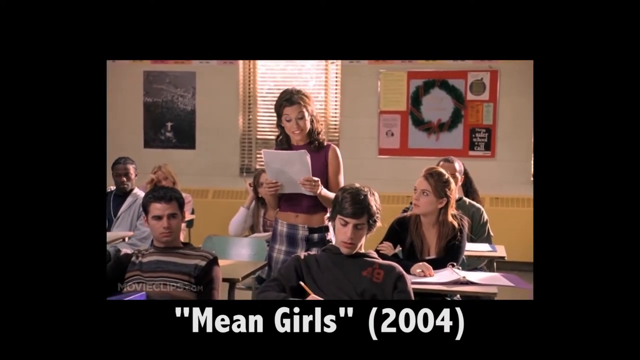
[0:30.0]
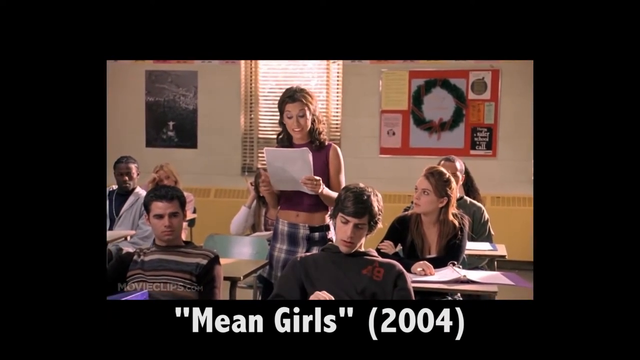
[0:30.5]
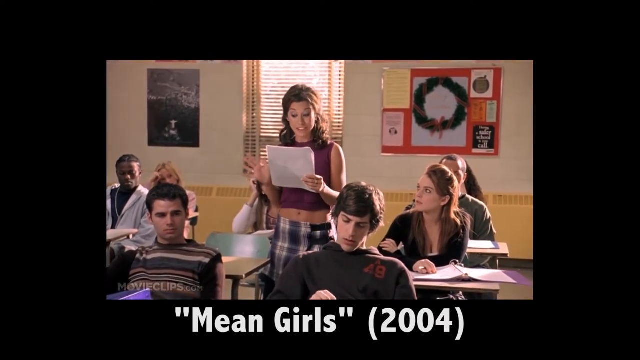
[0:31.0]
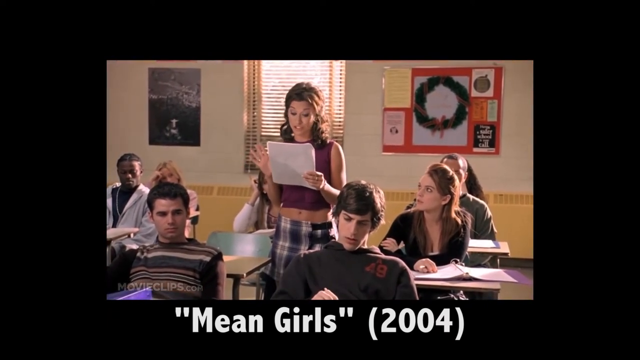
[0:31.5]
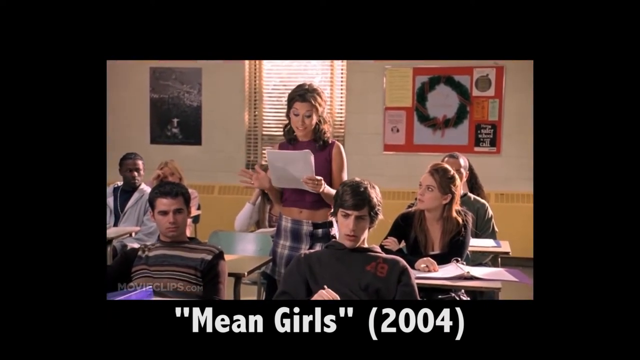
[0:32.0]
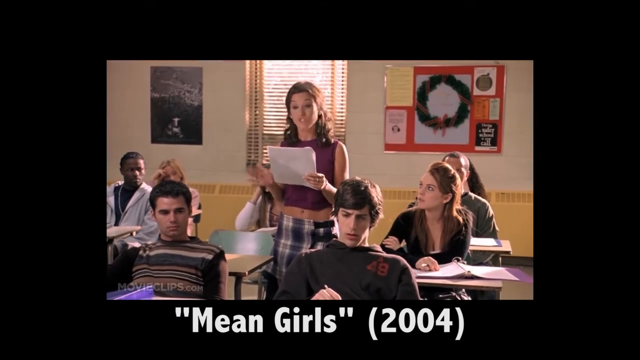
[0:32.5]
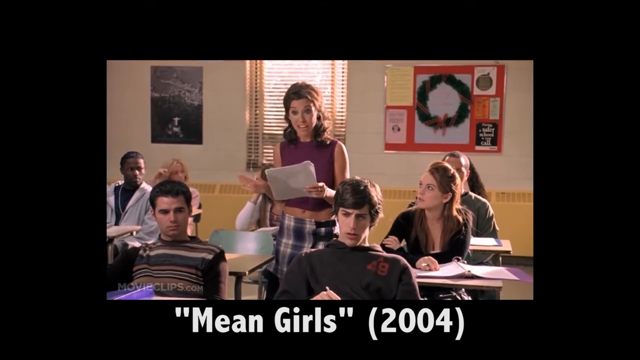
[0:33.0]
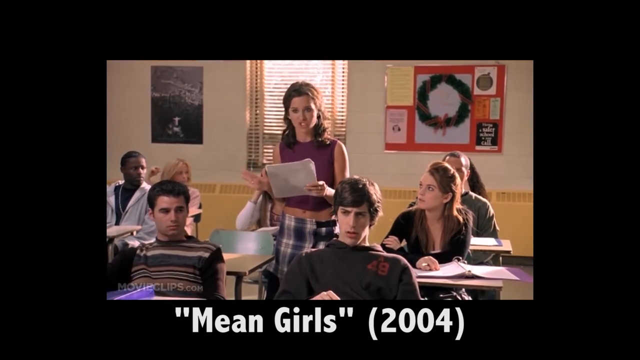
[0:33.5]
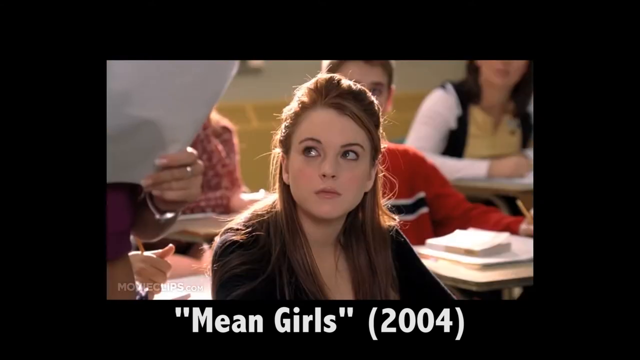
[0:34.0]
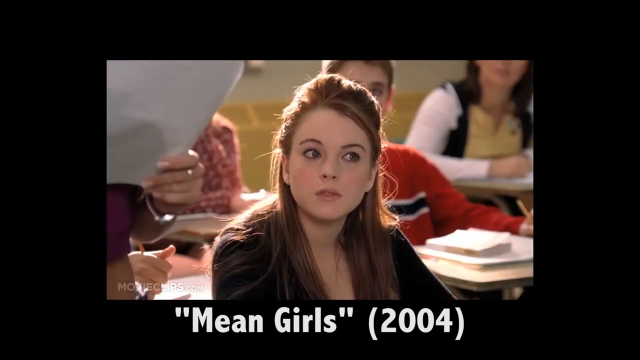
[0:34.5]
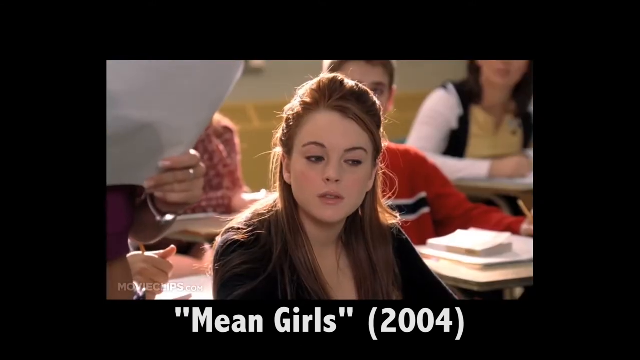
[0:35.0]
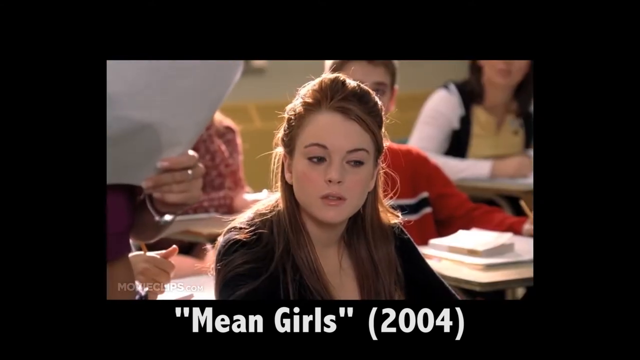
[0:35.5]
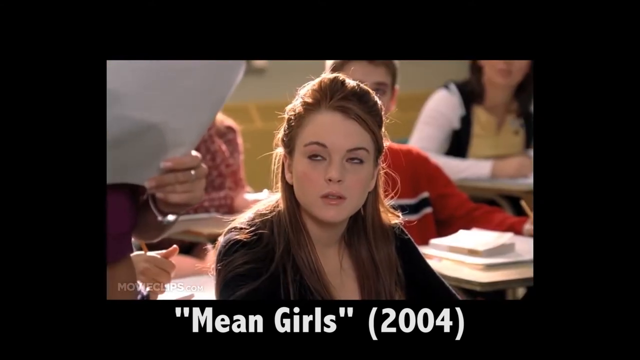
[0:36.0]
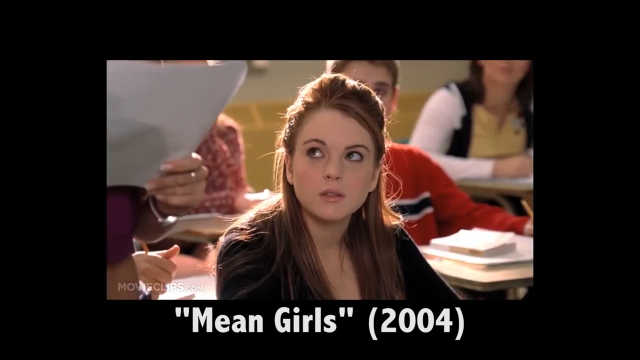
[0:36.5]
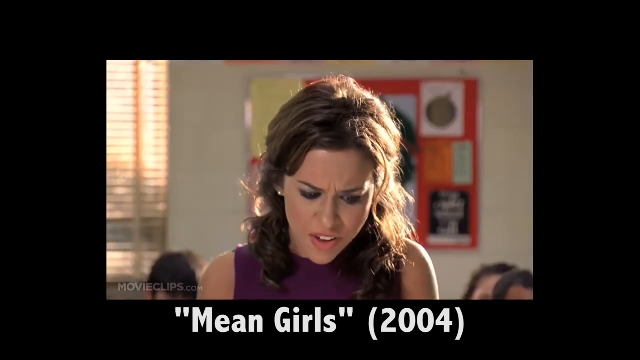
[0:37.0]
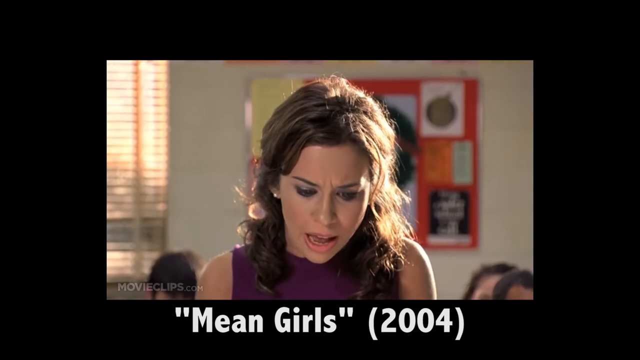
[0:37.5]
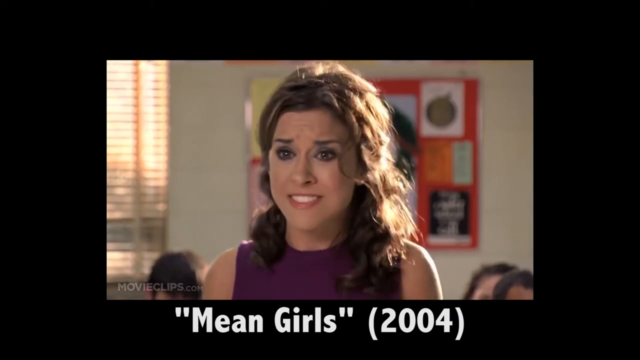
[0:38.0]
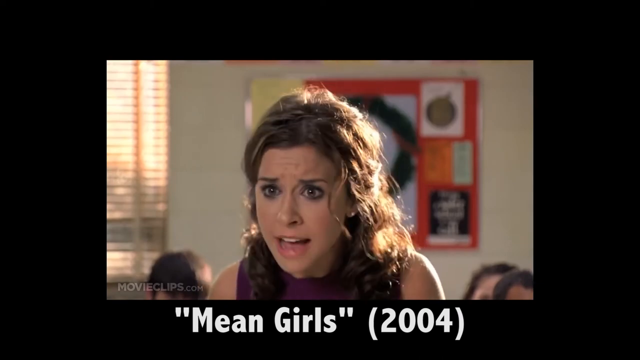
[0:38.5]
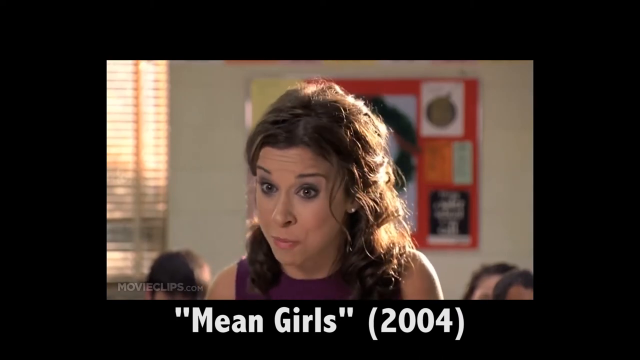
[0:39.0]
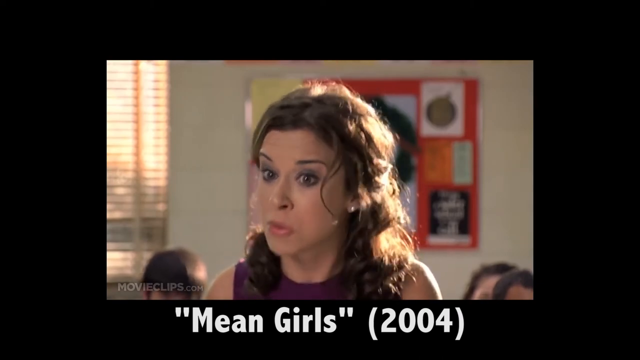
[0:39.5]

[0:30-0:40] A student stands in the middle of a classroom, holding a white paper in front of her and reading something, while the other students sit around her. The camera moves to one of the students, who wears a black shirt and has long brown hair, as she looks up and focuses her attention on the reader. When the camera goes back to the reading student, she looks very agitated or very upset as she reads and emphasizes what she is reading. The title "Mean Girls 2004" is at the bottom of the video.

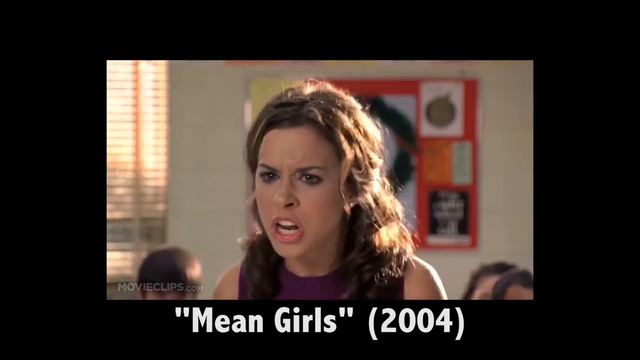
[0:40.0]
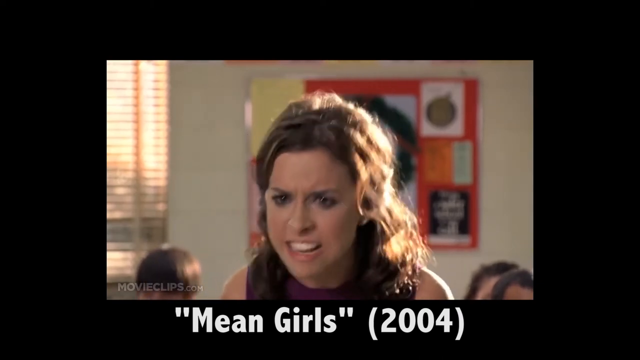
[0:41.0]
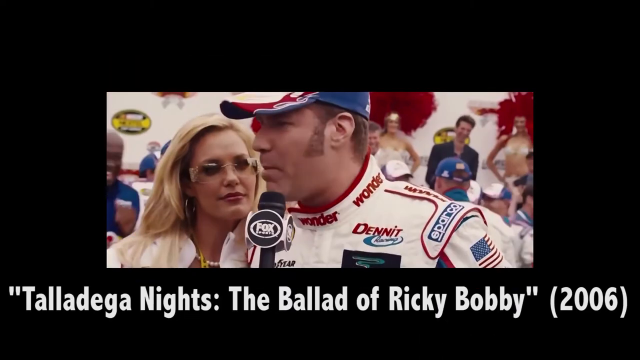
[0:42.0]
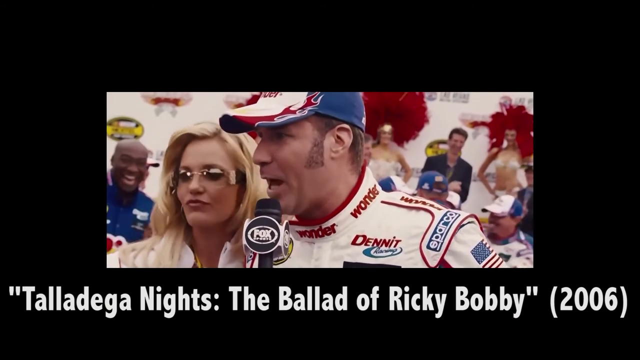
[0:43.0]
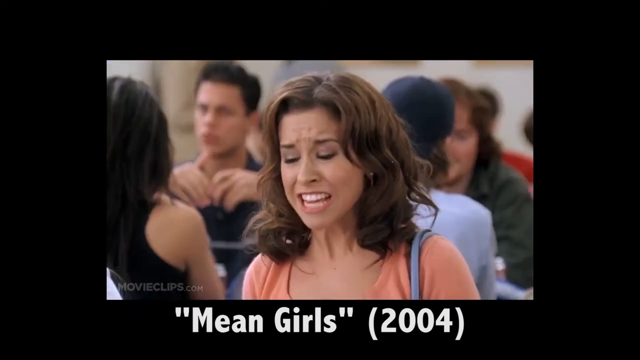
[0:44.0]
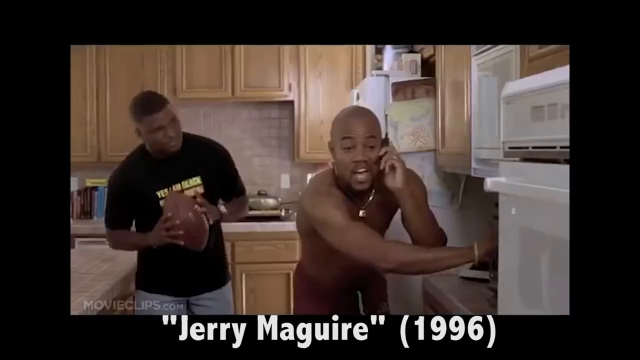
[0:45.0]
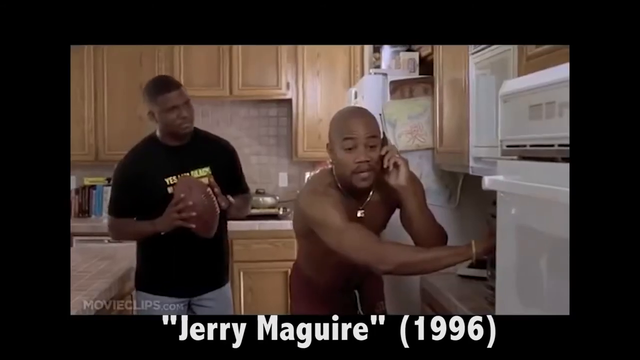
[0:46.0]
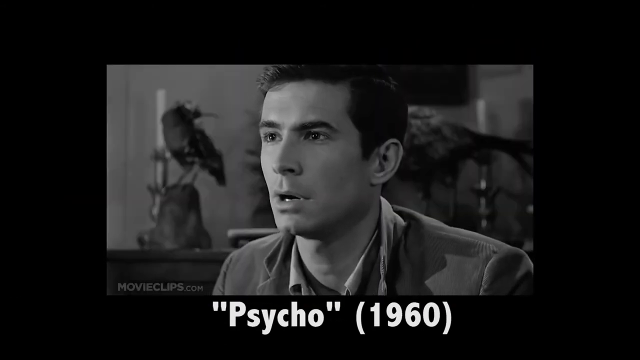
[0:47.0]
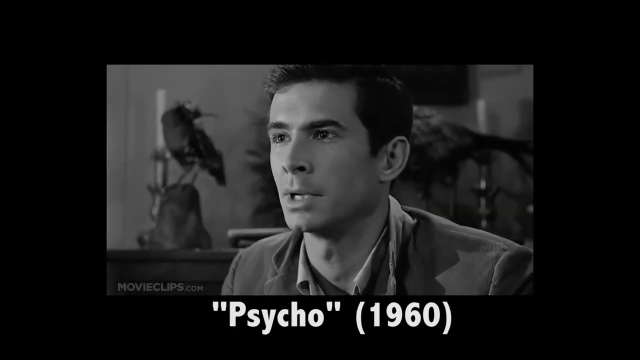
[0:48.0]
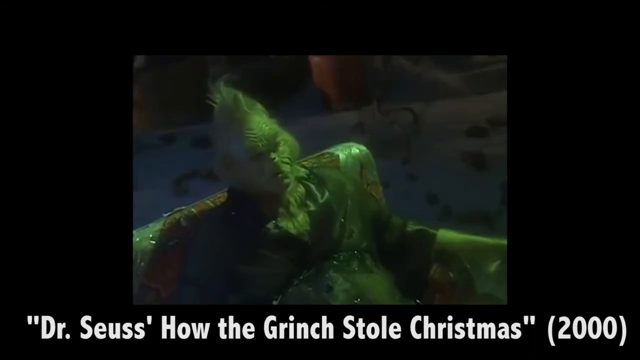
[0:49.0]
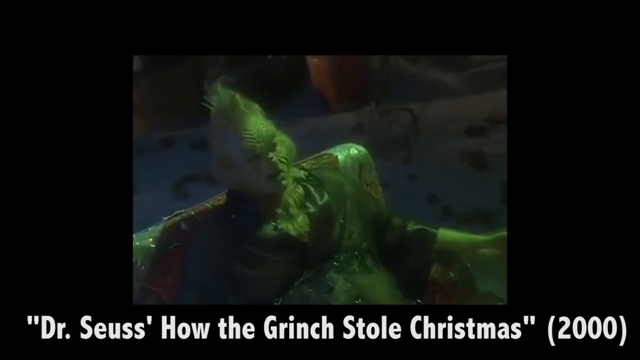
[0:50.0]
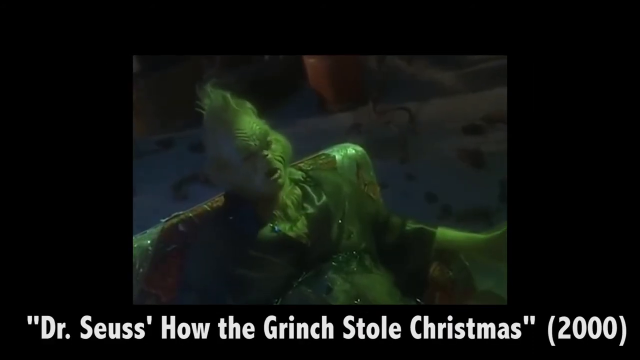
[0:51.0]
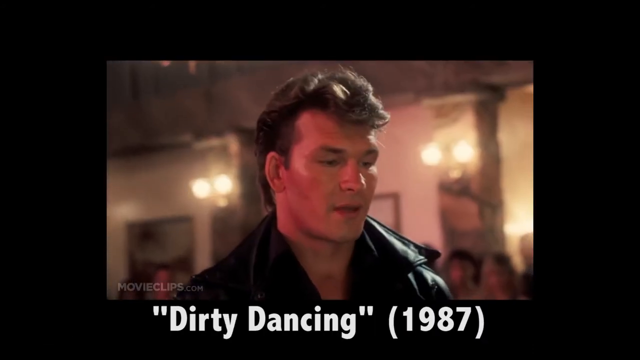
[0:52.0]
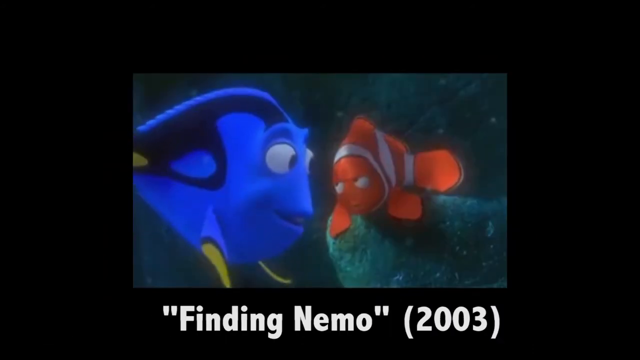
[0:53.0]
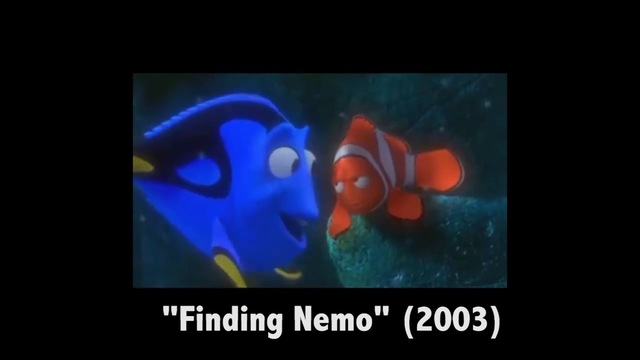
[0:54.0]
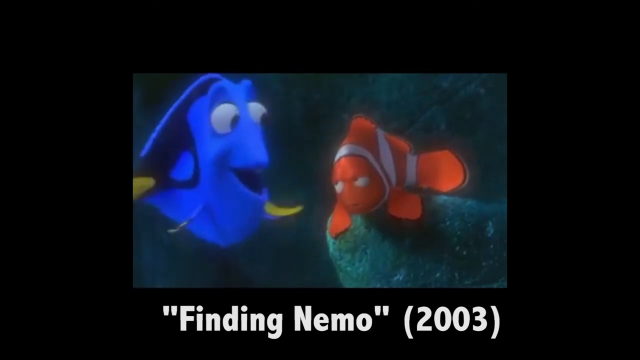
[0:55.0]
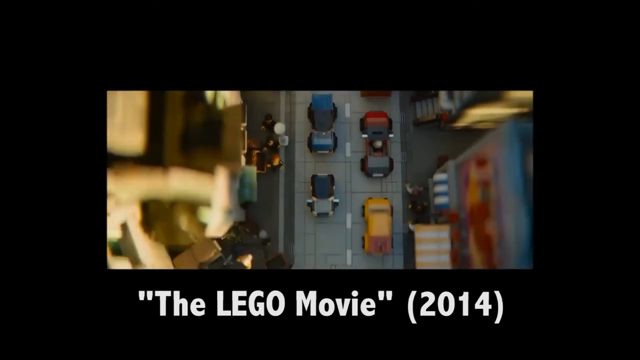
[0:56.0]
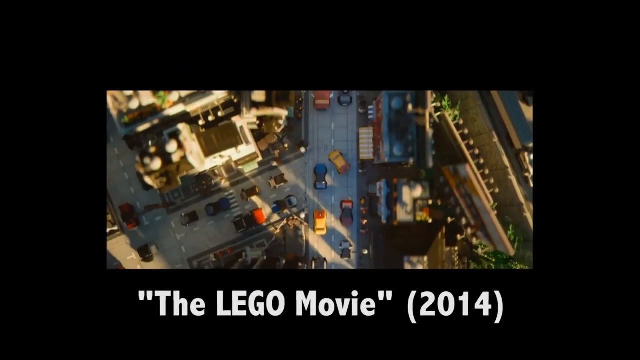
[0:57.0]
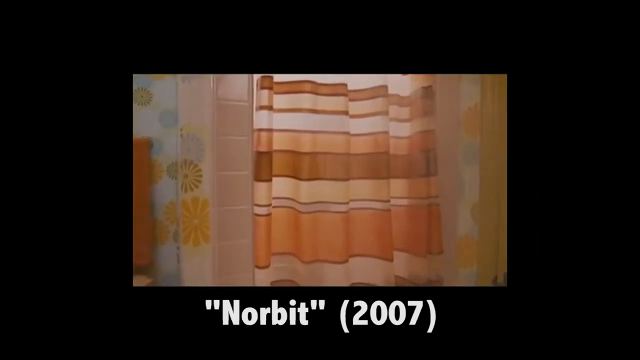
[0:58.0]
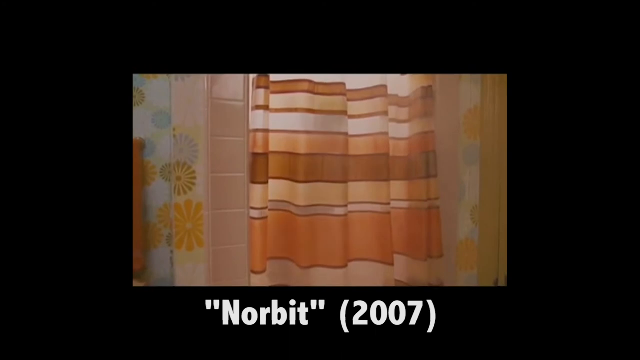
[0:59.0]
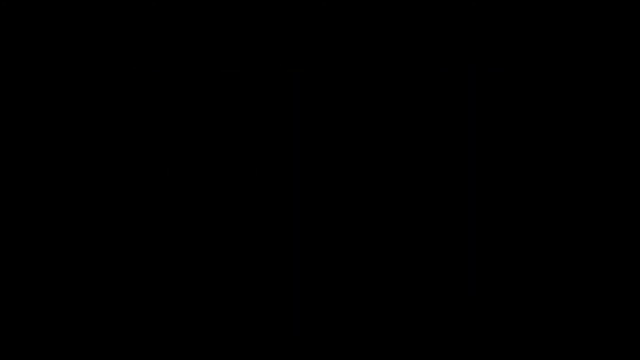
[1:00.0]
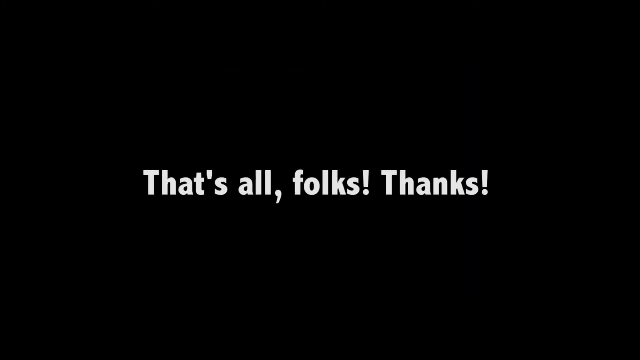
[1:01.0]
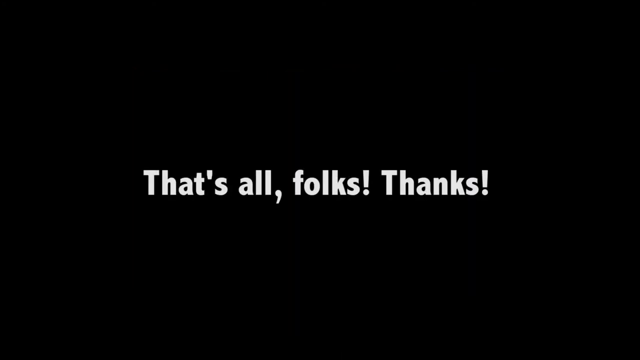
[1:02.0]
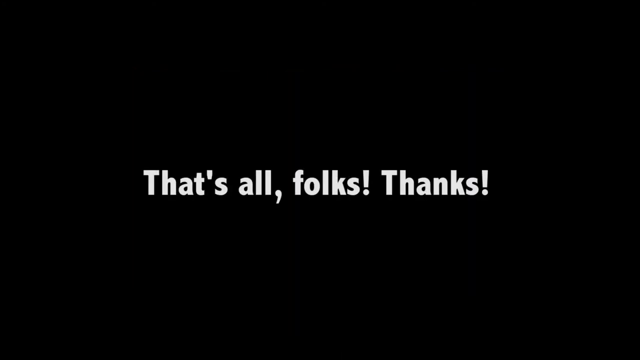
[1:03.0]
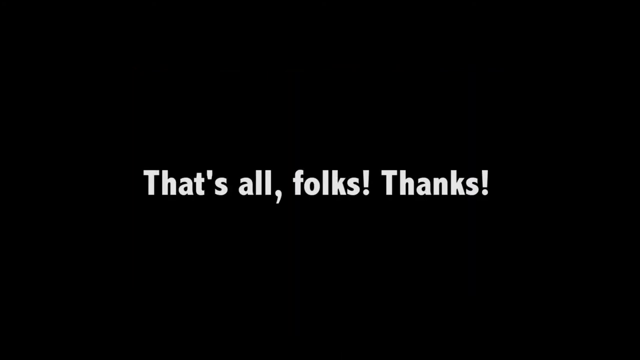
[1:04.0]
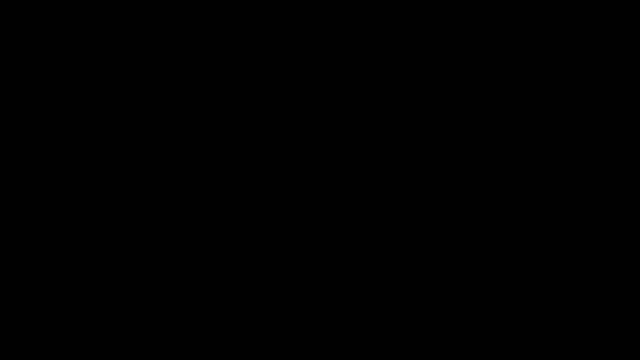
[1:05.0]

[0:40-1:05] Another title appears: "The Ballad of Ricky Bobby, 2006", with a man wearing a Formula One racing suit. Next comes Mean Girls, 2004, where a girl with brown hair wears an orange jersey, holds a blue bag and looks very serious. Then comes Psycho 1960, a black and white picture of a man with dark hair and bushy eyebrows wearing a suit and a shirt. Next is an image of Dr. Seuss, whose face looks very wrinkly and who looks very hairy; he is seated on a chair, and at the bottom it says "Dr. Seuss, How the Grinch Stole Christmas, 2000". Then a man wears a black leather jacket and a black shirt, with "Dirty Dancing, 1987" underneath. Finding Nemo, 2003 follows, with an orange and white fish called Nemo and a blue, black and yellow fish called Dory. The Lego Movie, 2014 shows a city of Legos with cars on the freeway, and Norbit (2007) shows a shower curtain. At the end, a black screen says "That's all, folks, thanks!" in bright white.